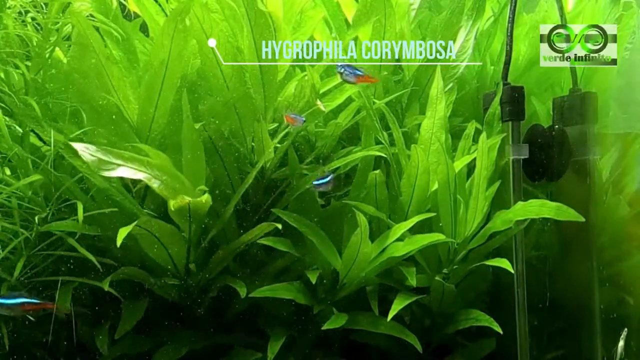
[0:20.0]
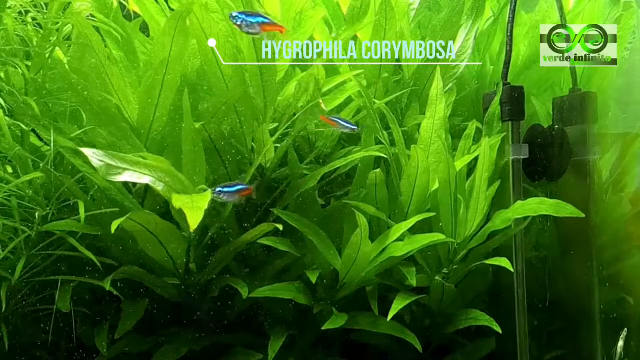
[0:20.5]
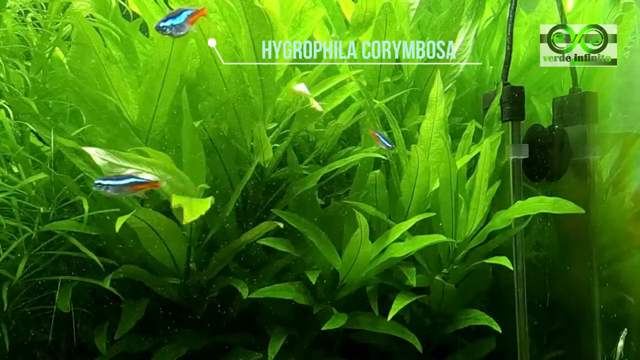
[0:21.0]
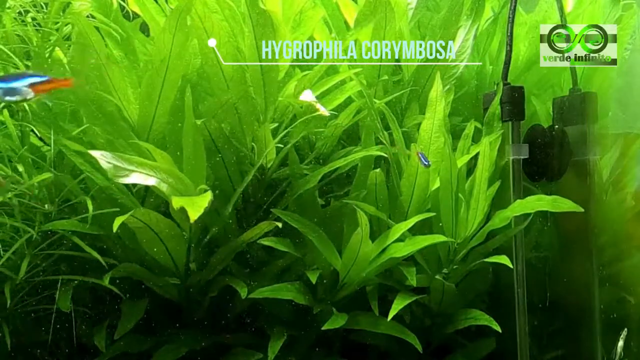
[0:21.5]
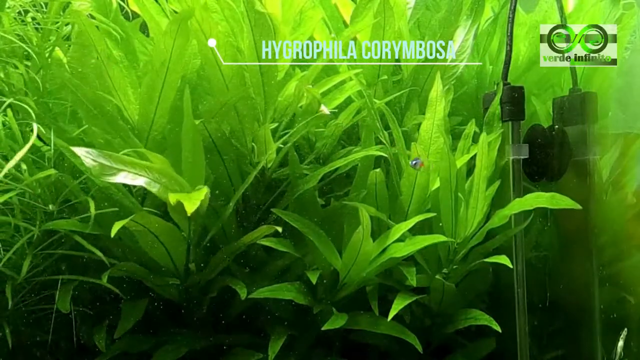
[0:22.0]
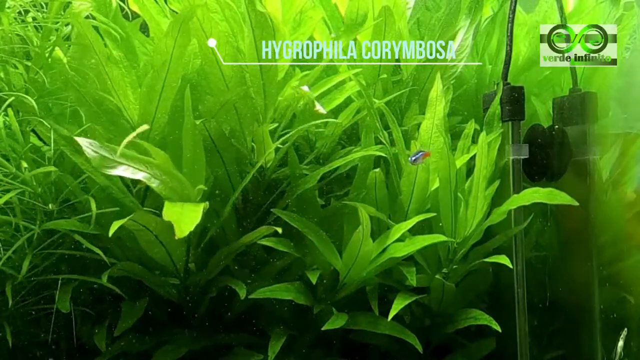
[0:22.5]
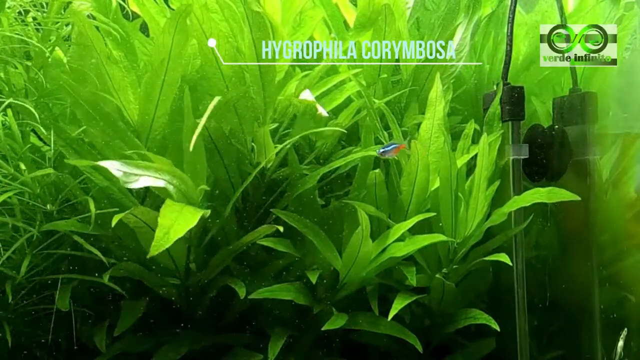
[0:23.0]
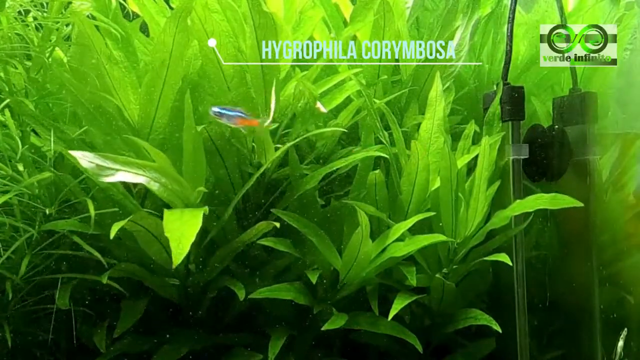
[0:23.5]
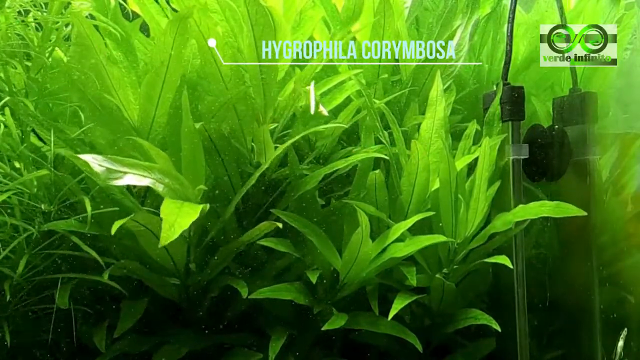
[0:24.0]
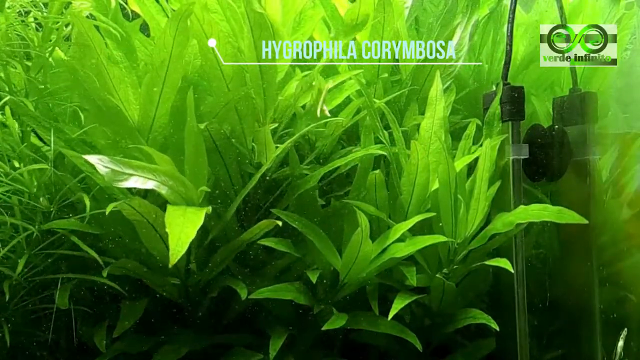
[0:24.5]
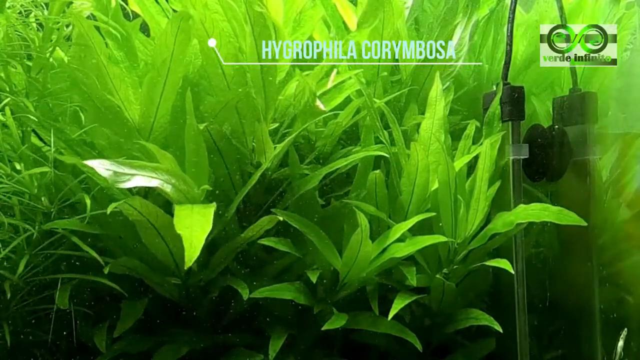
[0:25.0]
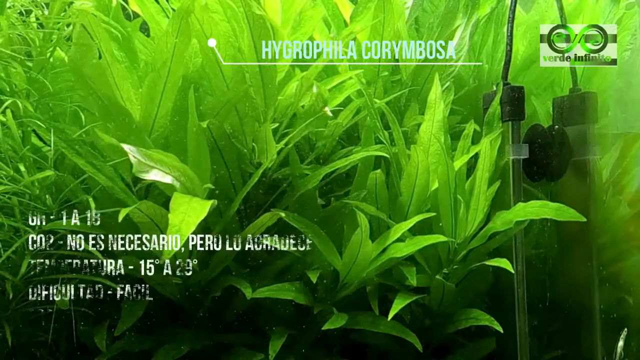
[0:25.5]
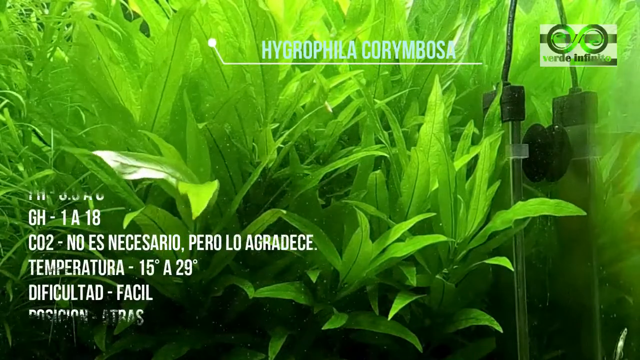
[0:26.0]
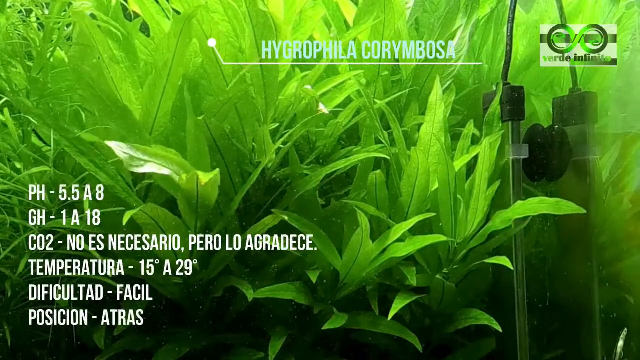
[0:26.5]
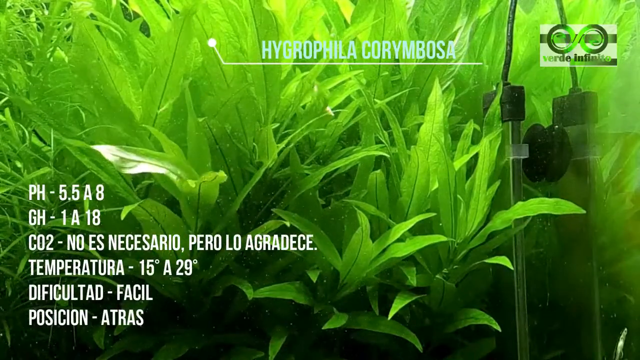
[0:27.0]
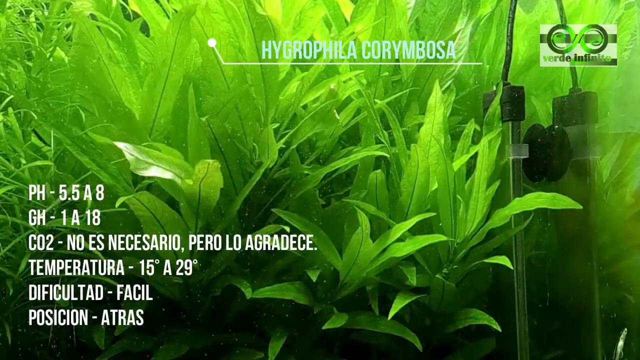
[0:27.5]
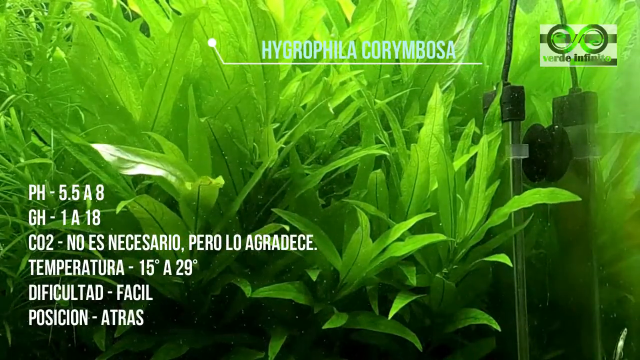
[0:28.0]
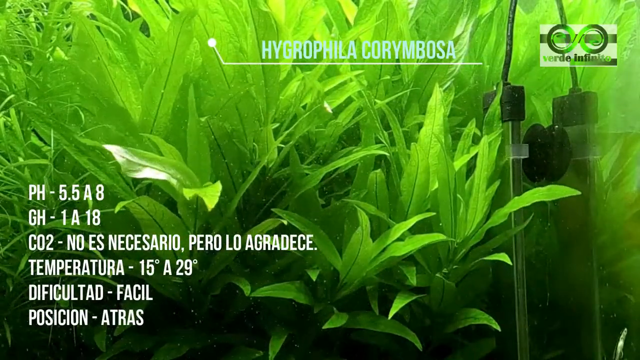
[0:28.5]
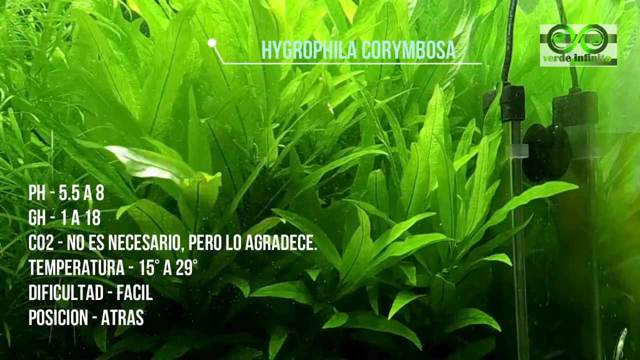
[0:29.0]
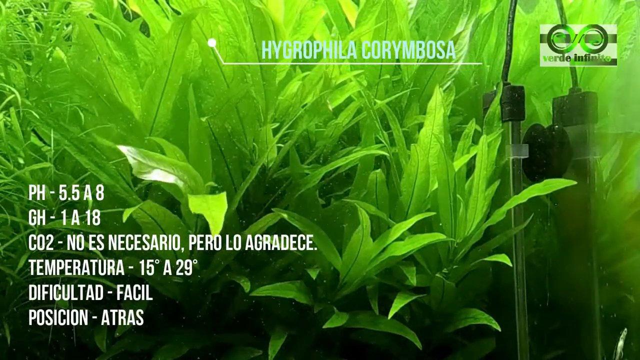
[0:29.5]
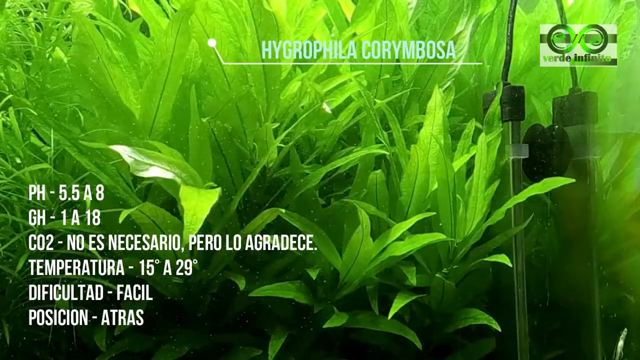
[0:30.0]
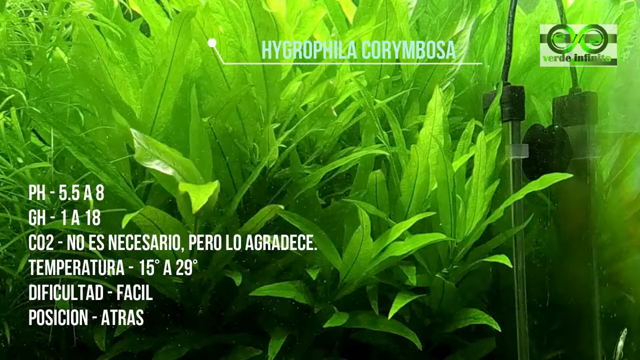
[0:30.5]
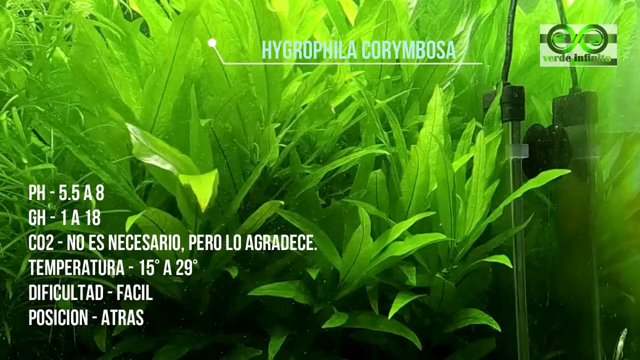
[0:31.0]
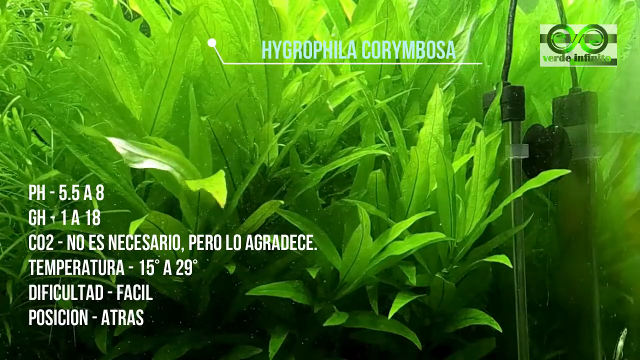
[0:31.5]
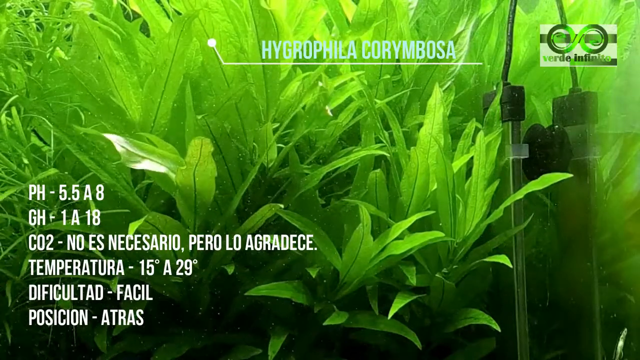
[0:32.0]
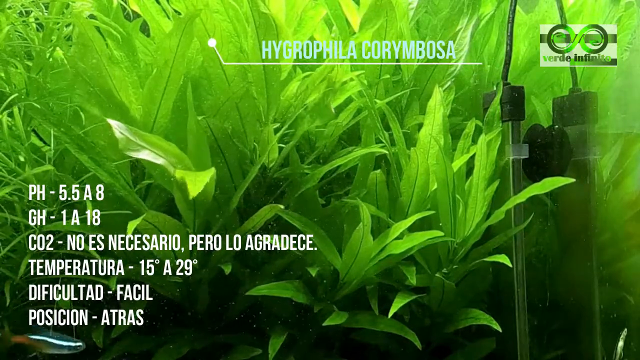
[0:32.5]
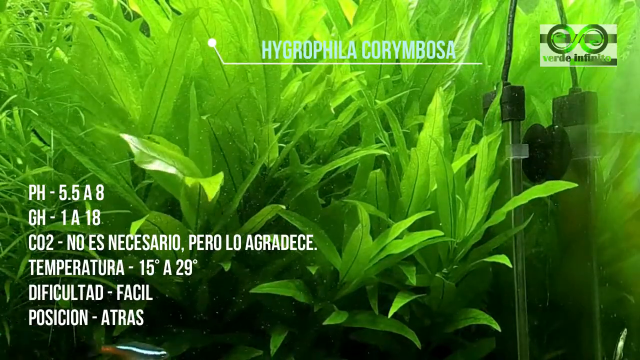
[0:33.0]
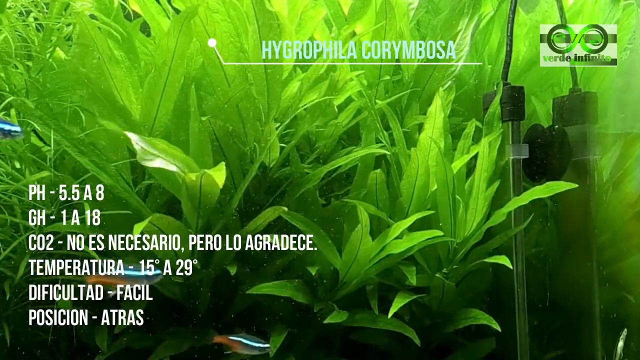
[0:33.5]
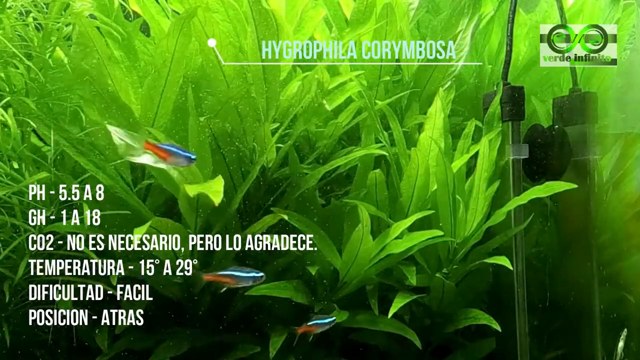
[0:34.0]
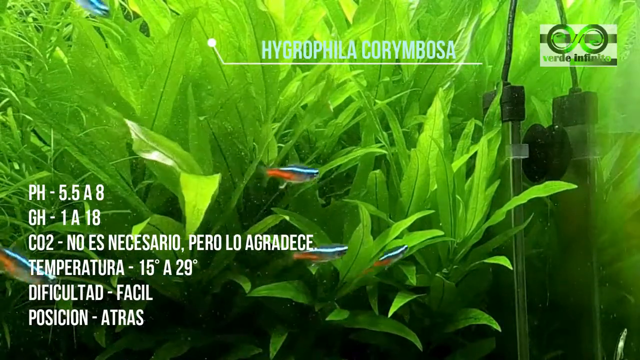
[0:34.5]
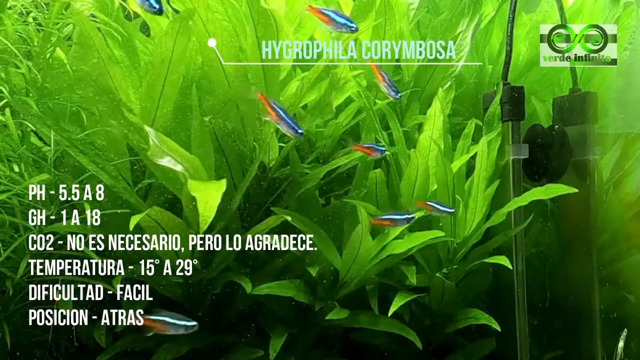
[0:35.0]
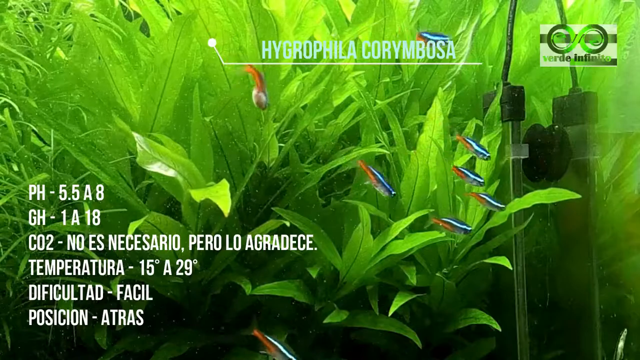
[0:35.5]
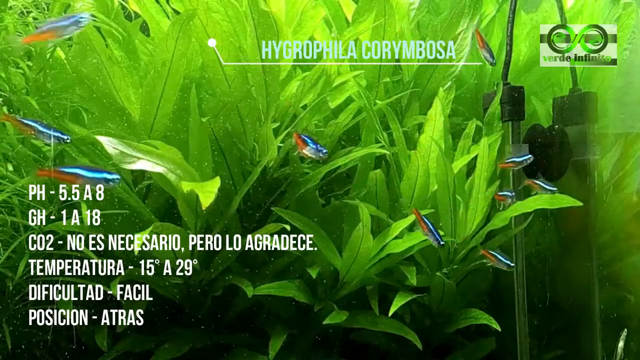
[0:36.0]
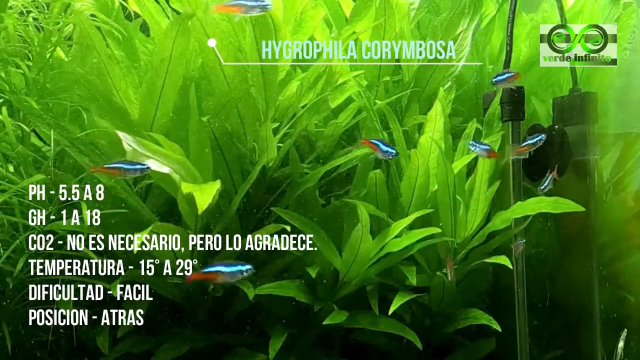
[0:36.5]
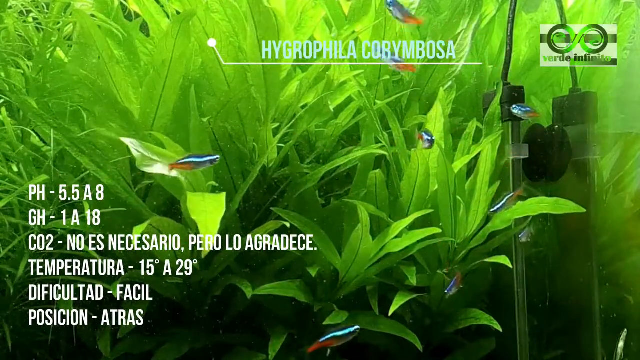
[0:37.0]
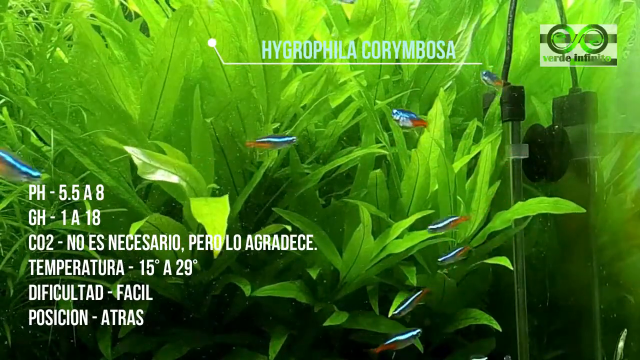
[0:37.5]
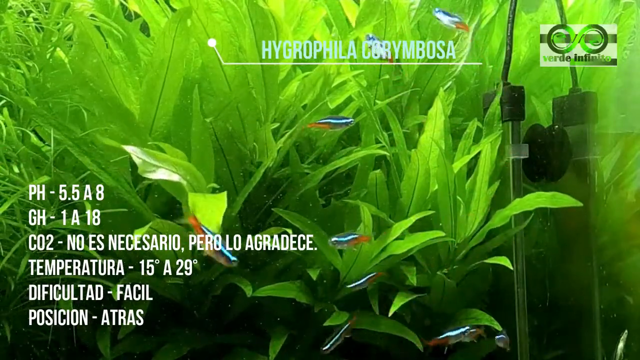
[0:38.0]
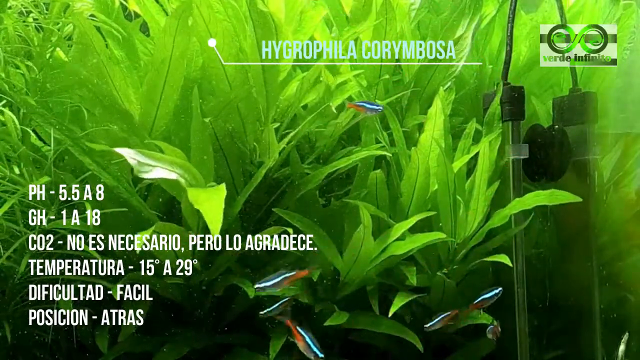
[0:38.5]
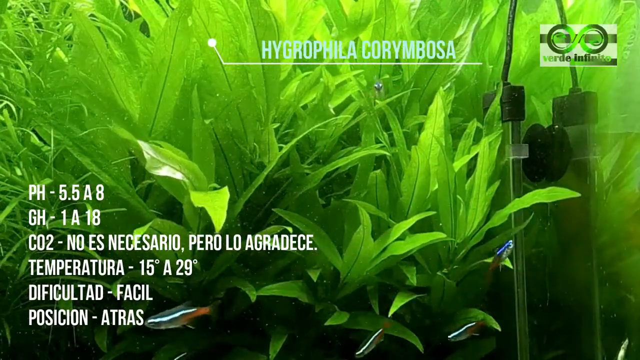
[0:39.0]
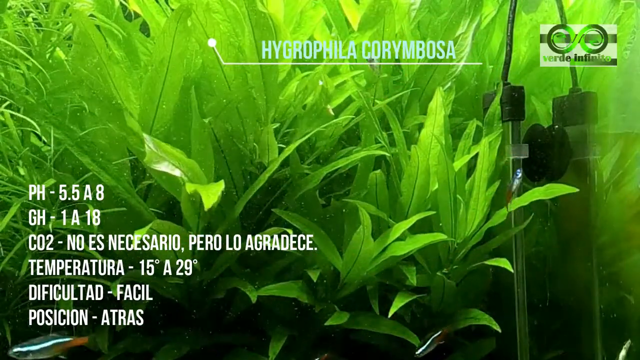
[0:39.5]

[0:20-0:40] A fish tank is in focus, filled with a lot of very vibrant green plant life. In front of the plants, three very small fish, sort of blue with a whitish, light-blue stripe through the middle of their bodies and an orange tail, move rapidly around. They quickly disappear from the screen, leaving the green plant life moving subtly in the water. Text then appears on the screen: first a headline in what appears to be some Romance language, and on the left what appears to be about six rows of white text giving statistics about the aquarium. There appears to be a pH rating and the temperature of the tank, possibly 15 degrees, with two different measurements shown. The text also covers position and difficulty, maybe of the tank or some equipment related to it; the difficulty reads easy, with something about behind. On the right-hand side of the tank there seems to be some sort of Verde Infinitivo logo in the top right, almost like a horizontal H.